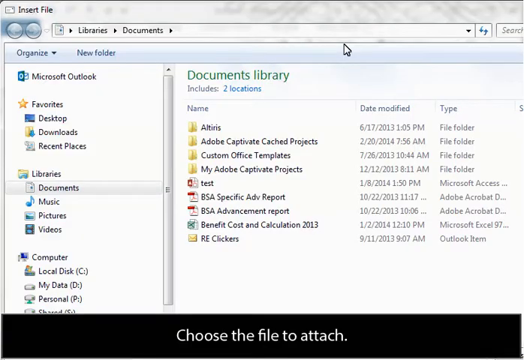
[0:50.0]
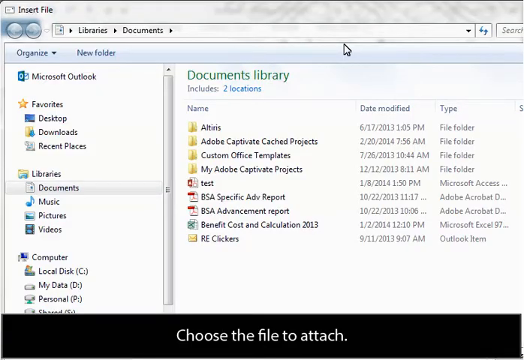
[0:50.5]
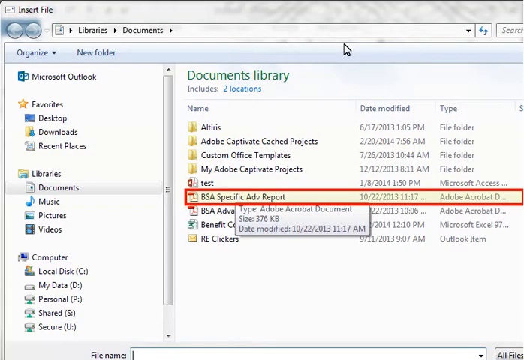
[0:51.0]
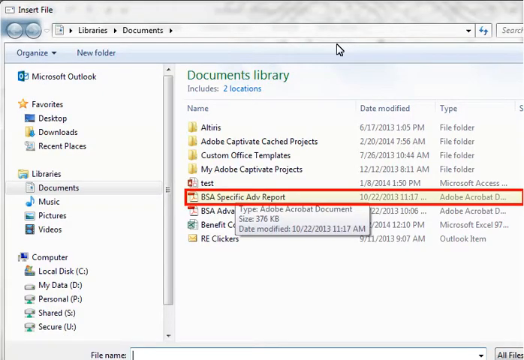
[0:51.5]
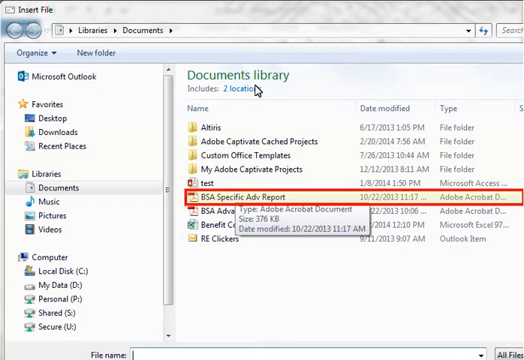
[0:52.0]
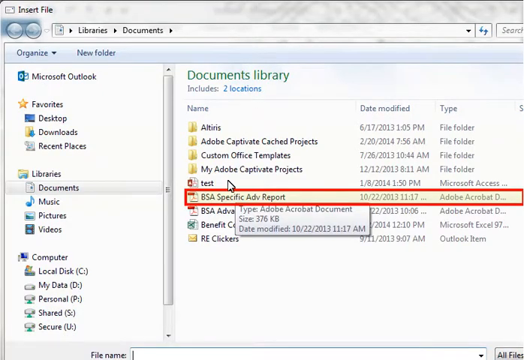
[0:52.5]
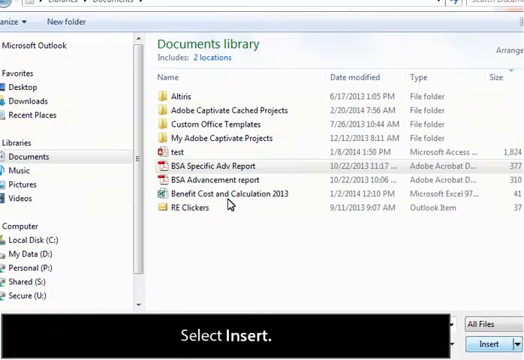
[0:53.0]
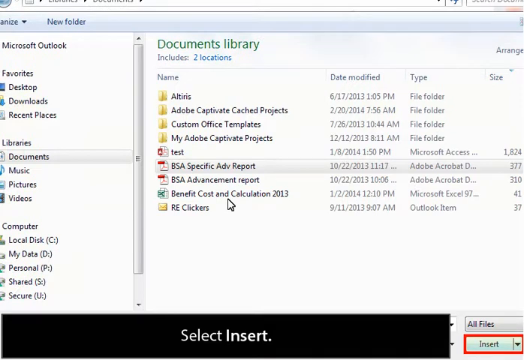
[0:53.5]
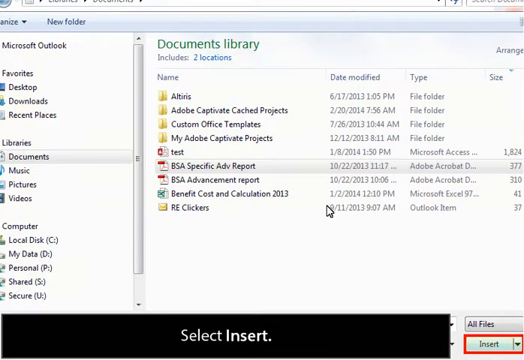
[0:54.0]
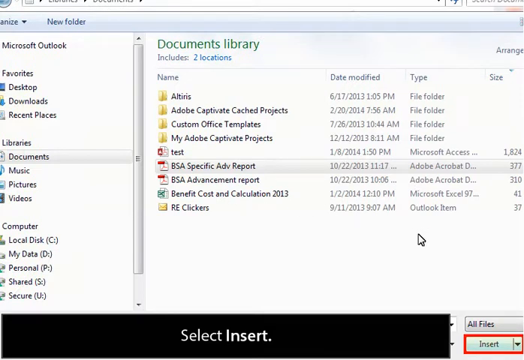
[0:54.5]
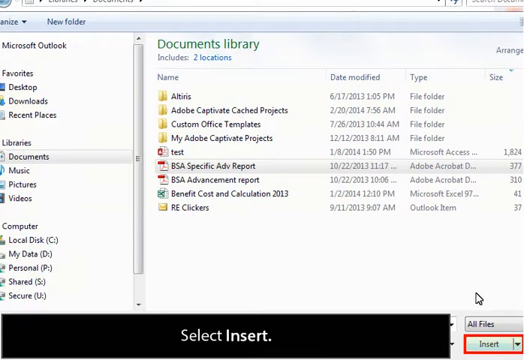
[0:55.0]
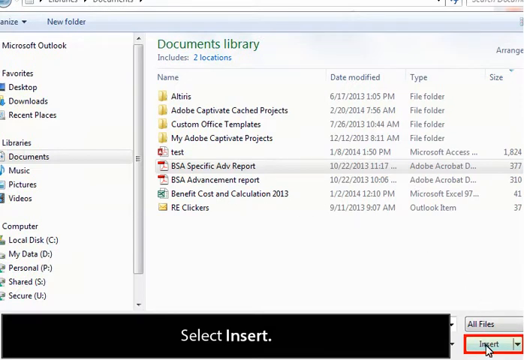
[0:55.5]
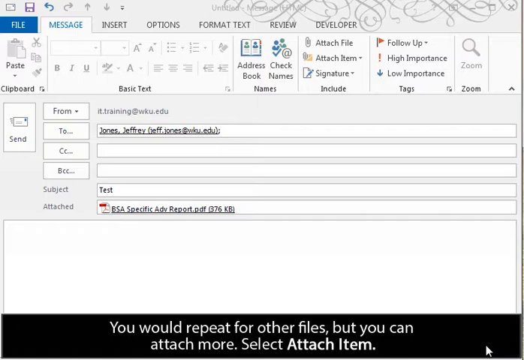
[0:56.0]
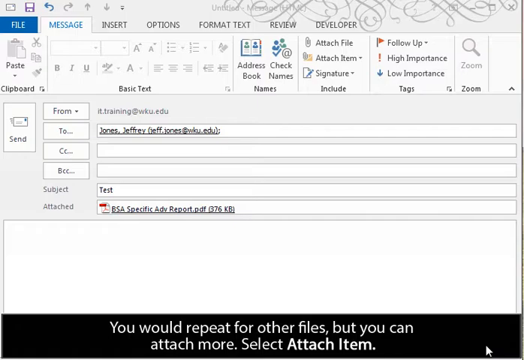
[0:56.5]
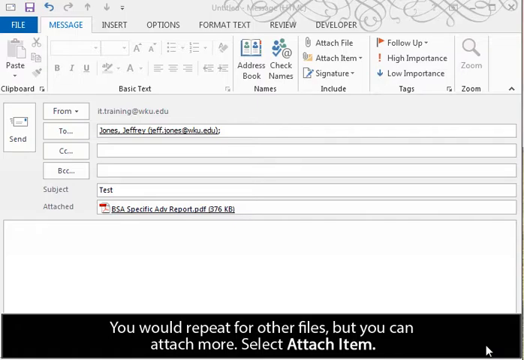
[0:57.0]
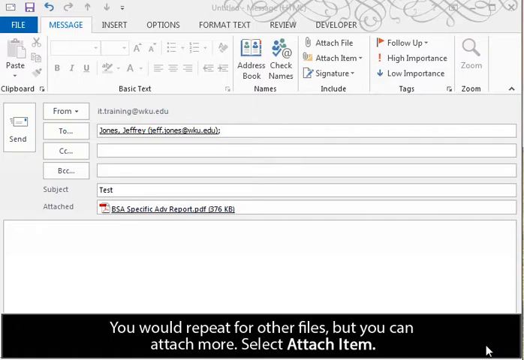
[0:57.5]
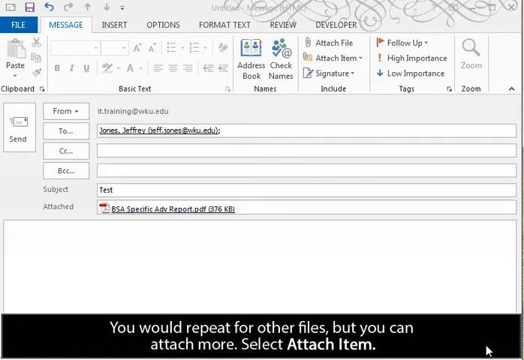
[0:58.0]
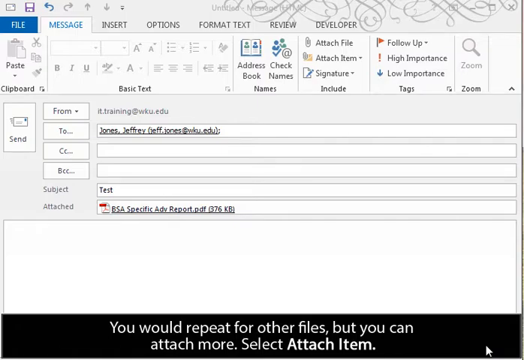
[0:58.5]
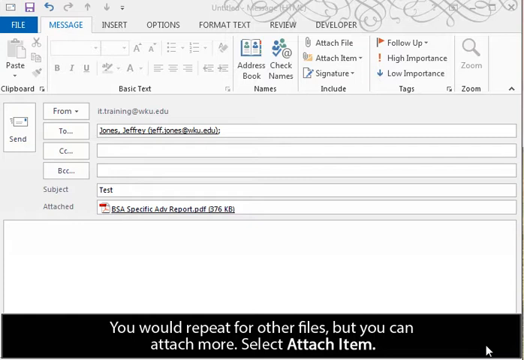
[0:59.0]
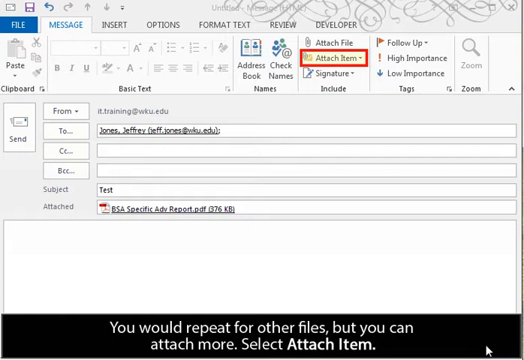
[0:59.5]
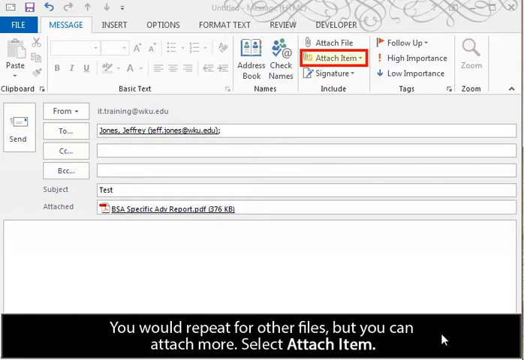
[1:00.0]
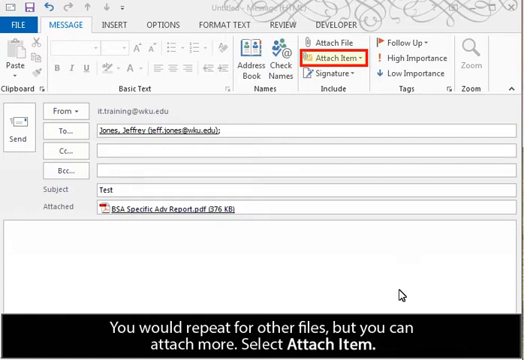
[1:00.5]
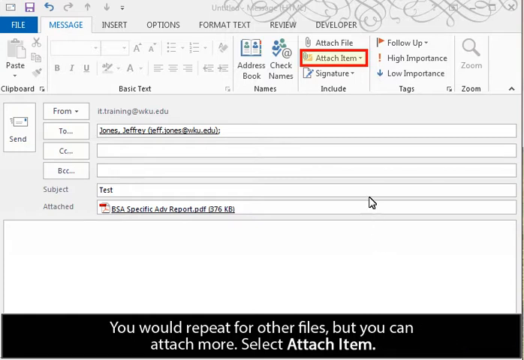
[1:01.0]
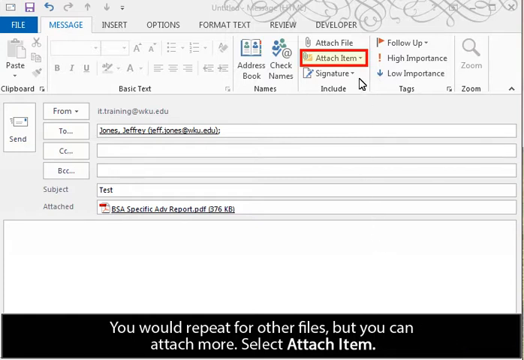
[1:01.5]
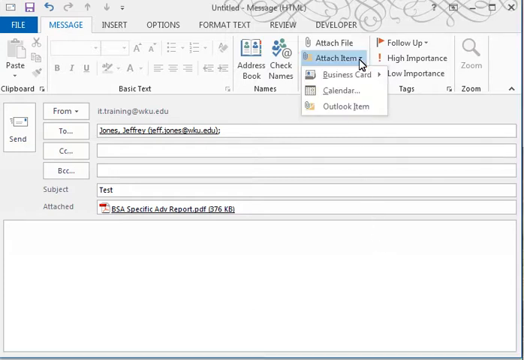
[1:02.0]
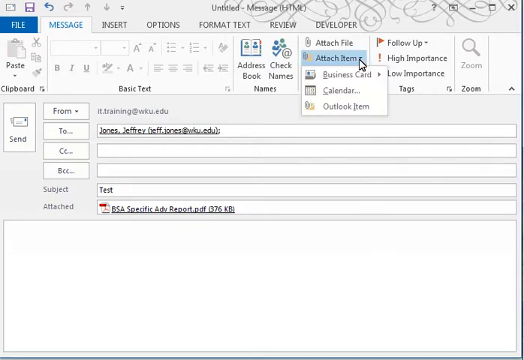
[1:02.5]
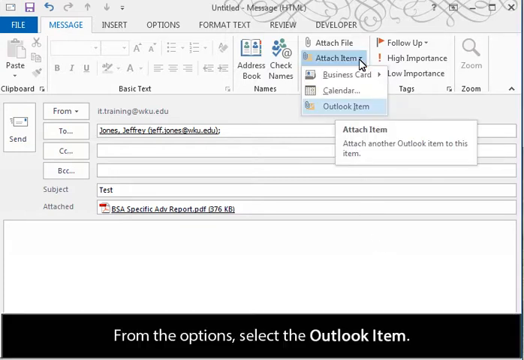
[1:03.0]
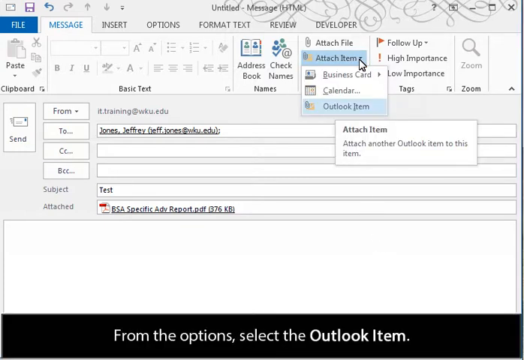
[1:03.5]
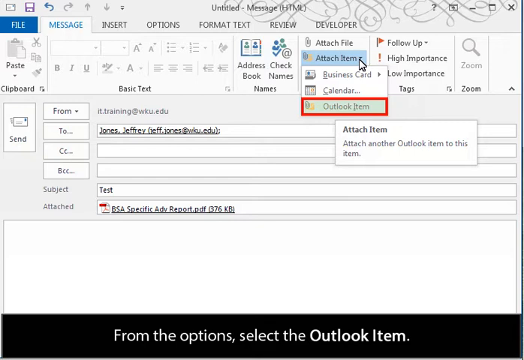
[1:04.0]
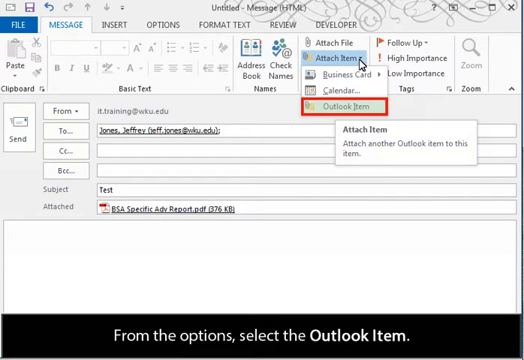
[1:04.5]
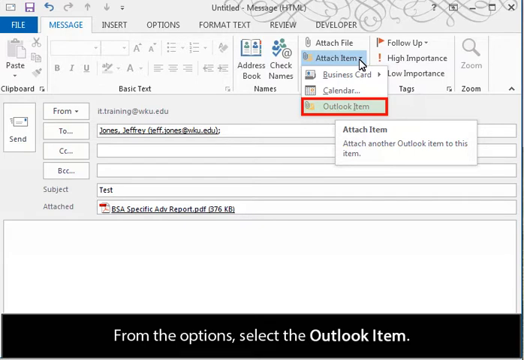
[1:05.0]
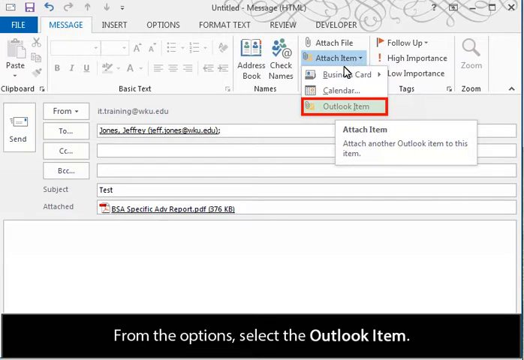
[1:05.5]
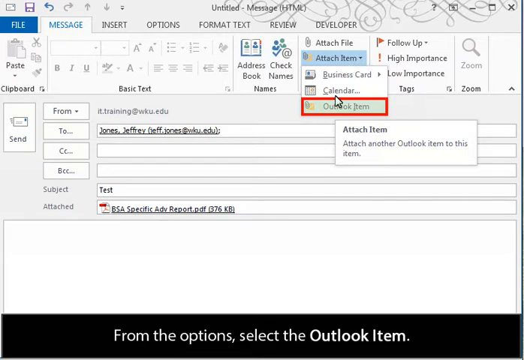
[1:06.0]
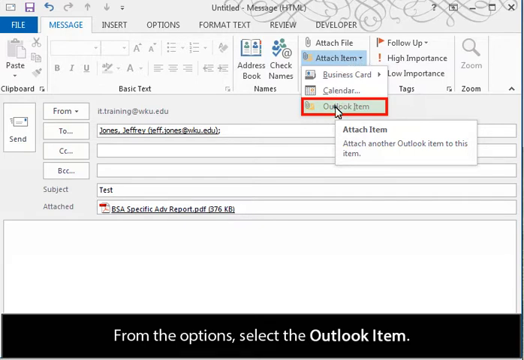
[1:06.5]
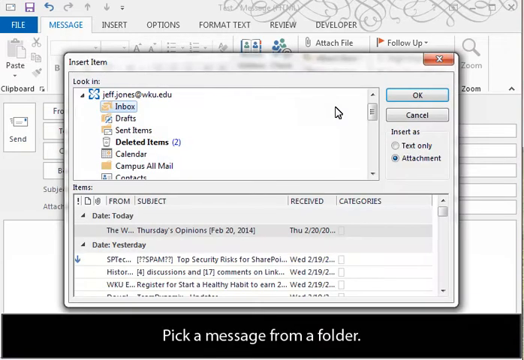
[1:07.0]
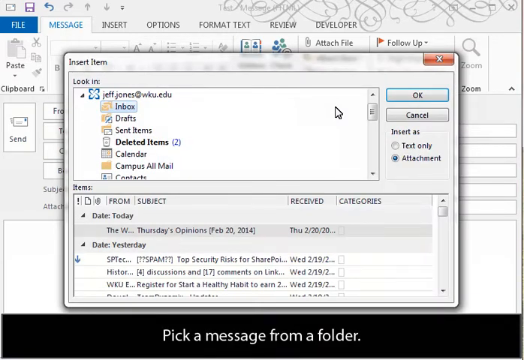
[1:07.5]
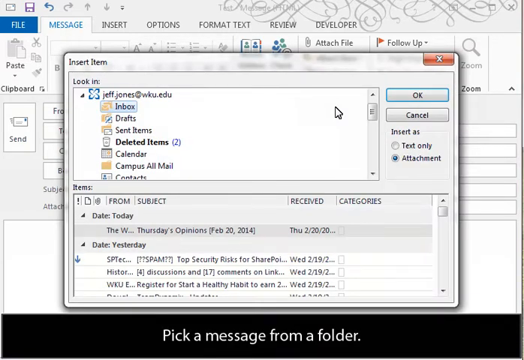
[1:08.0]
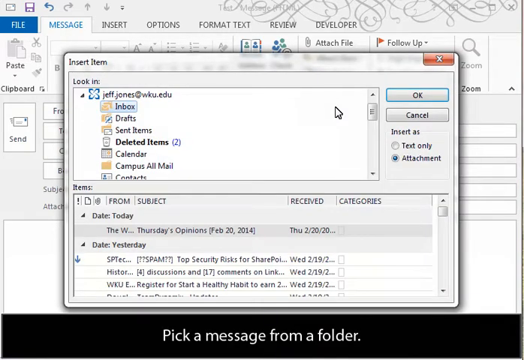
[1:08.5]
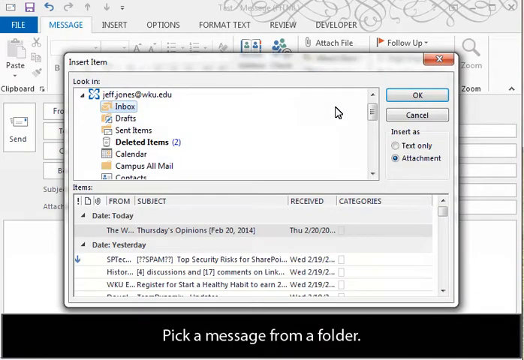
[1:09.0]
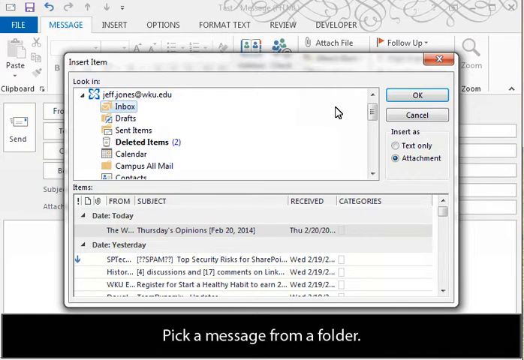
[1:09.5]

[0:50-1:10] The insert file window is open, showing the document library directory with the folders and files available to attach to the email. A PDF file titled "BSA Specifics ADV report" is highlighted with a red box; the user clicks it and hits the insert button. In the email message, the attached box now shows the BSA specific ADV report PDF file. On the top toolbar, the attach item drop-down menu is highlighted with a red square. The user clicks the drop-down, and its last item, Outlook item, is highlighted with a red square. The user clicks it with the cursor, and another window titled "Insert Item" pops up, showing folders and files to choose from. The Campus All Mail folder is highlighted with a red square.